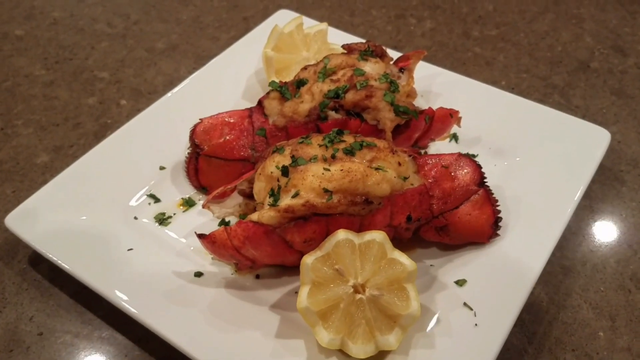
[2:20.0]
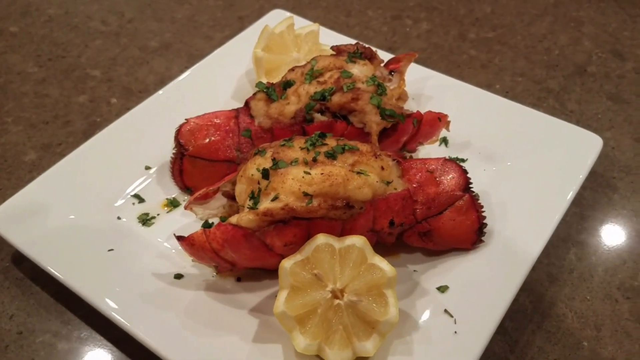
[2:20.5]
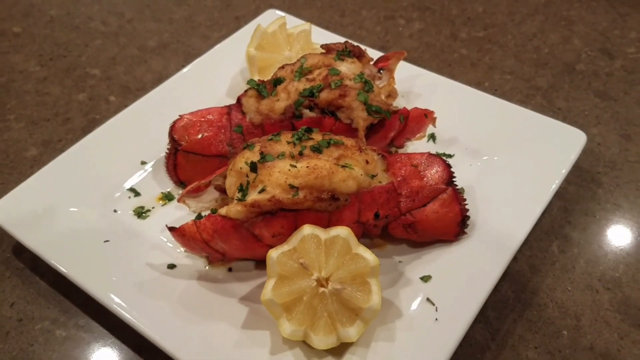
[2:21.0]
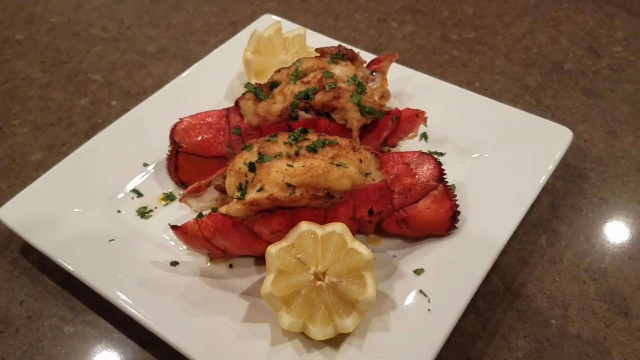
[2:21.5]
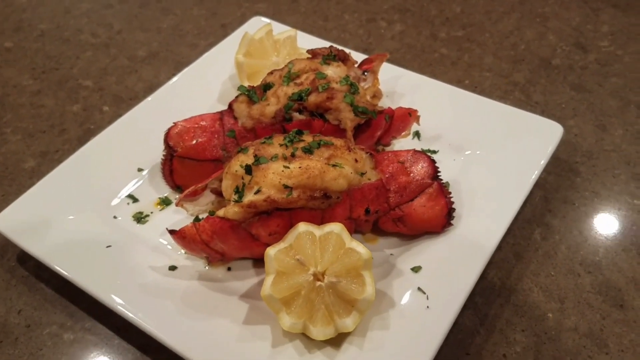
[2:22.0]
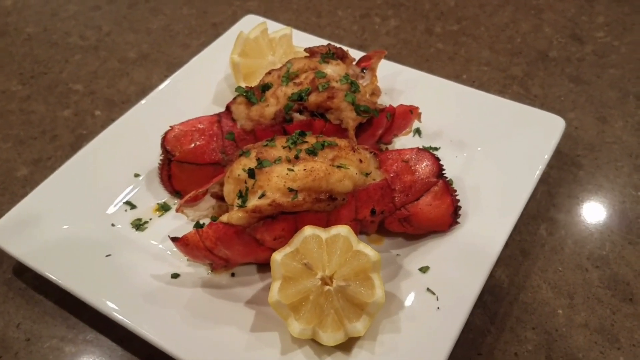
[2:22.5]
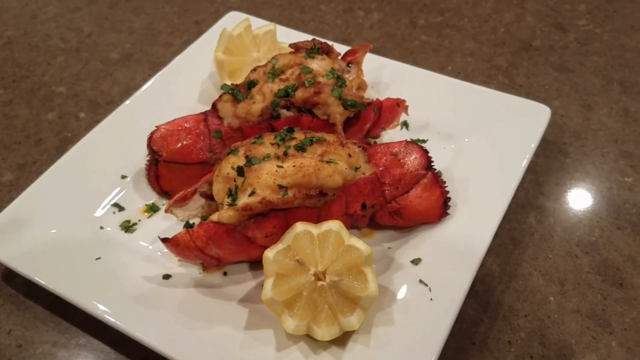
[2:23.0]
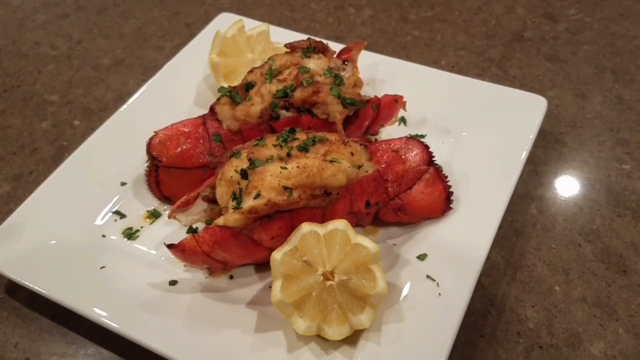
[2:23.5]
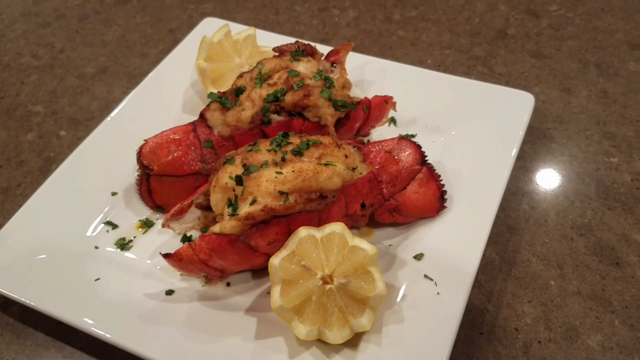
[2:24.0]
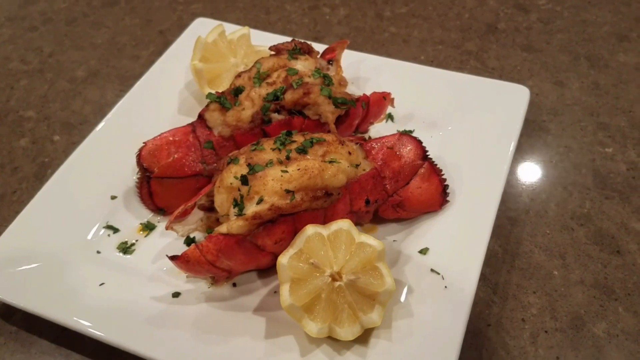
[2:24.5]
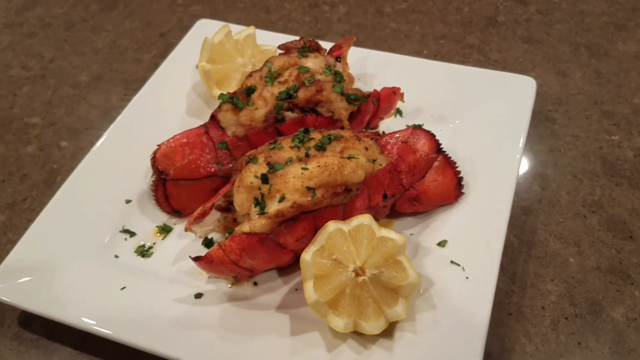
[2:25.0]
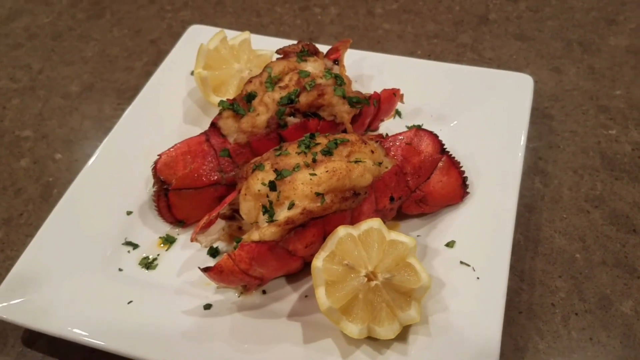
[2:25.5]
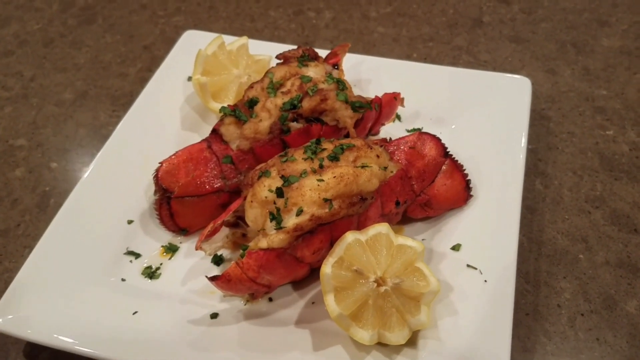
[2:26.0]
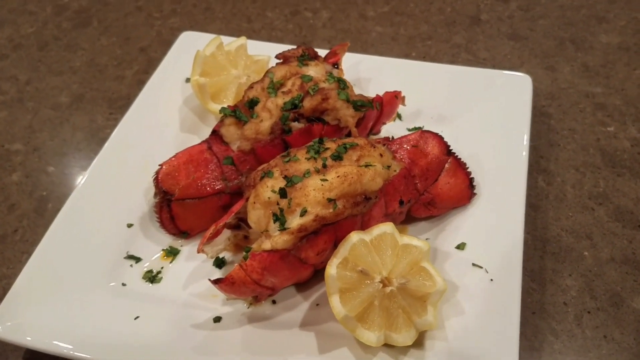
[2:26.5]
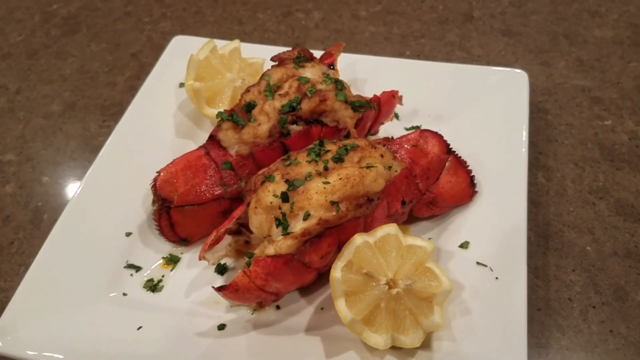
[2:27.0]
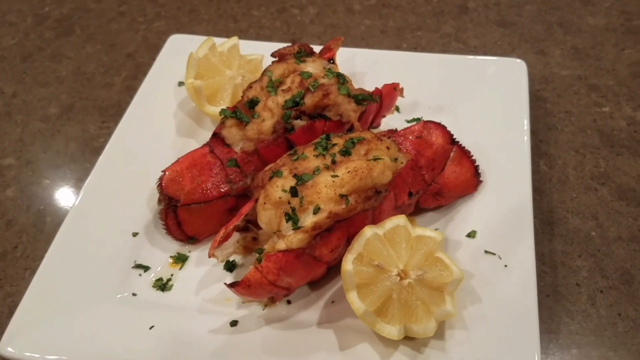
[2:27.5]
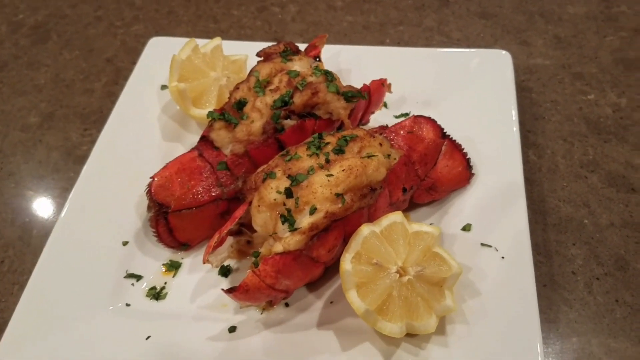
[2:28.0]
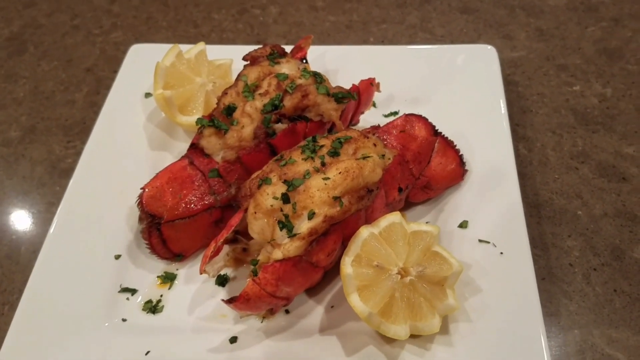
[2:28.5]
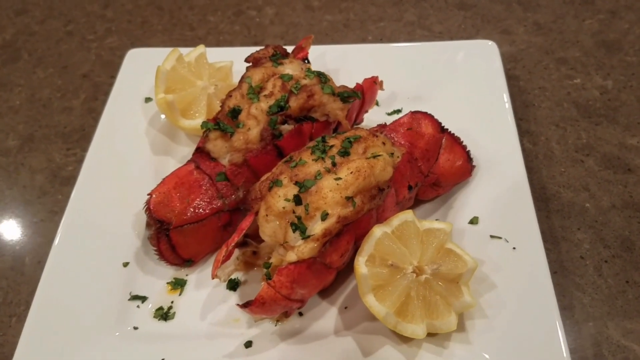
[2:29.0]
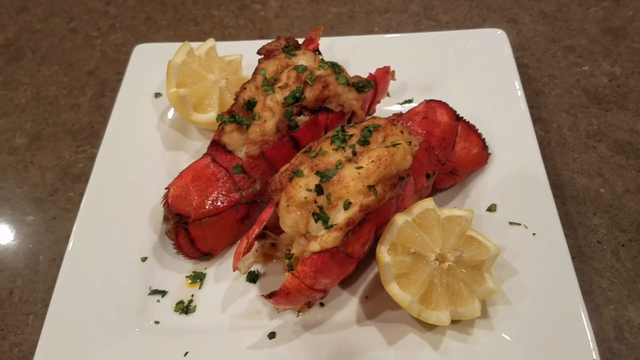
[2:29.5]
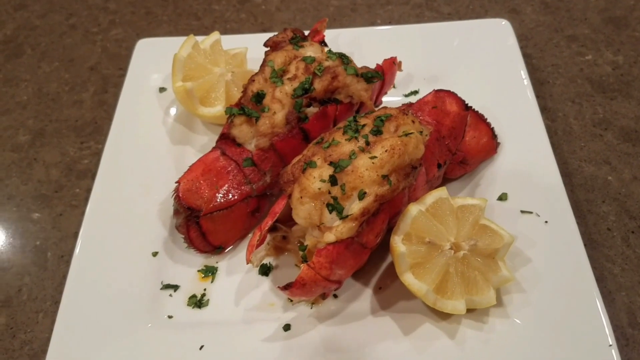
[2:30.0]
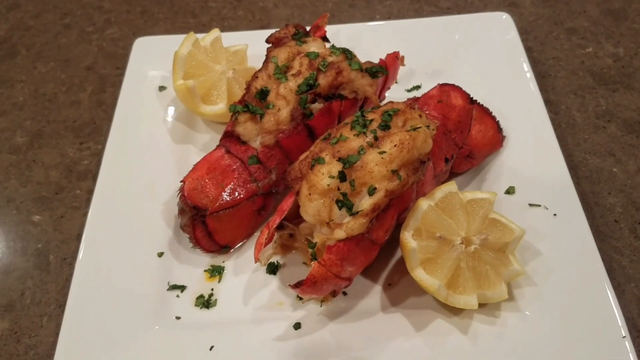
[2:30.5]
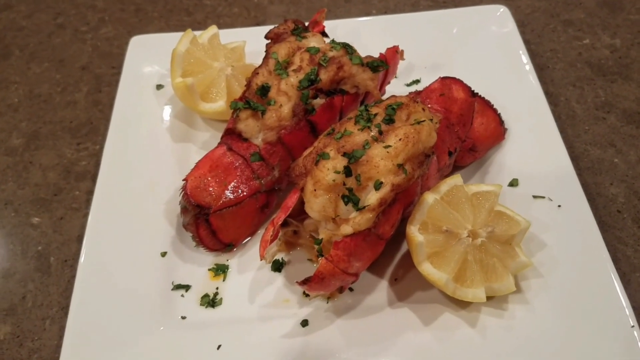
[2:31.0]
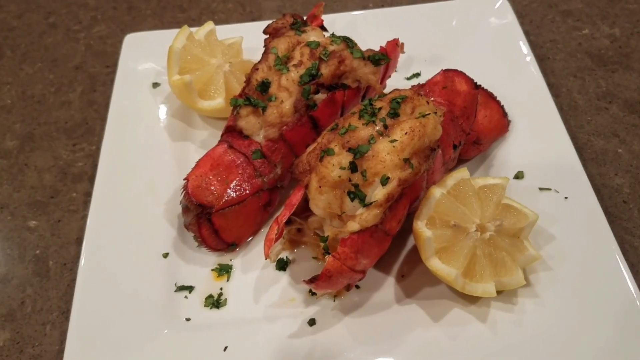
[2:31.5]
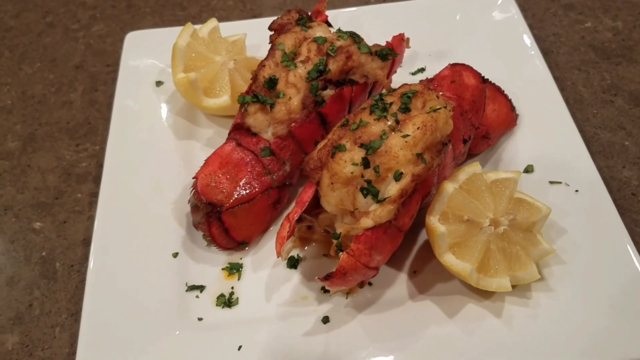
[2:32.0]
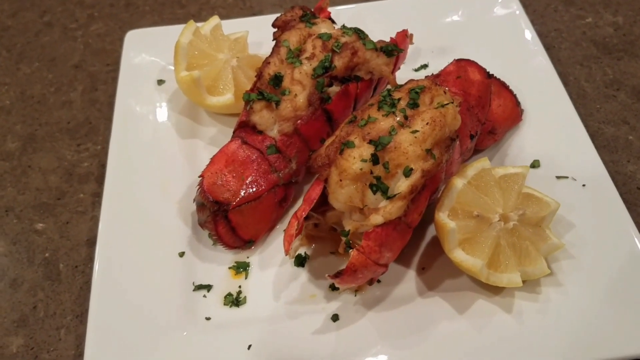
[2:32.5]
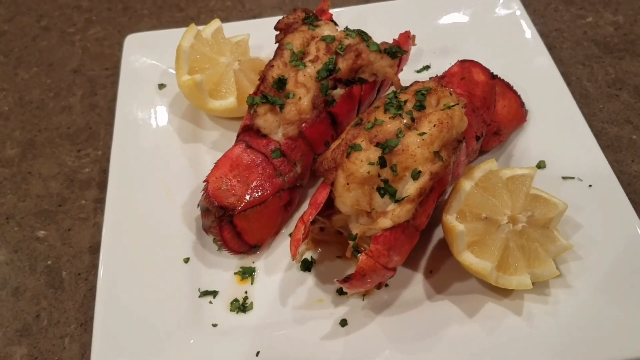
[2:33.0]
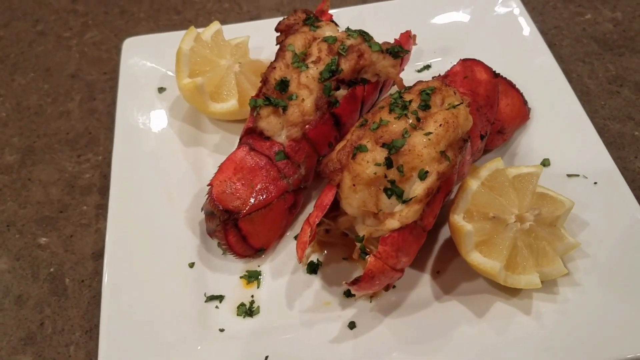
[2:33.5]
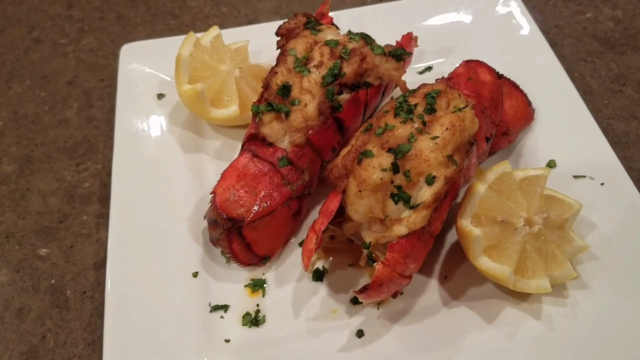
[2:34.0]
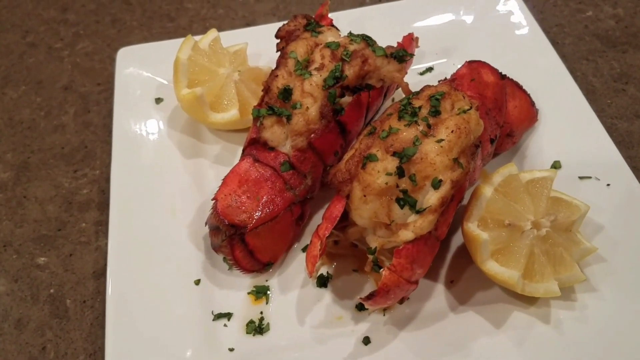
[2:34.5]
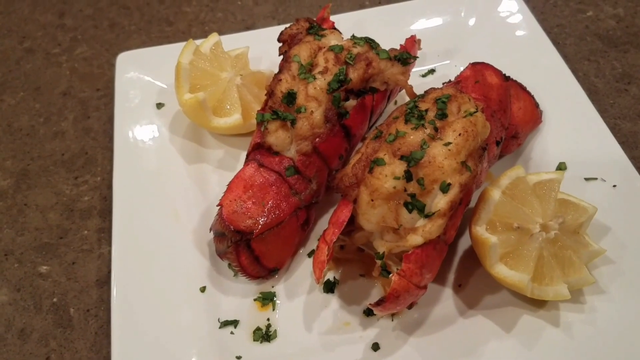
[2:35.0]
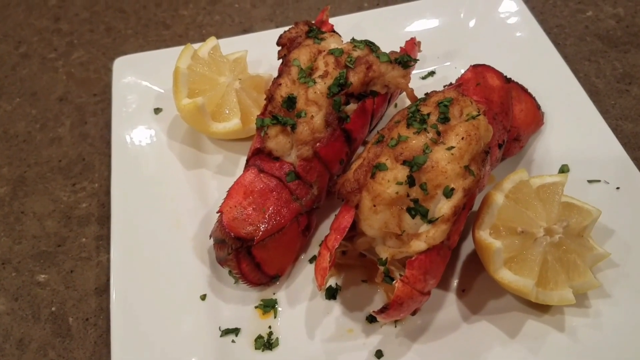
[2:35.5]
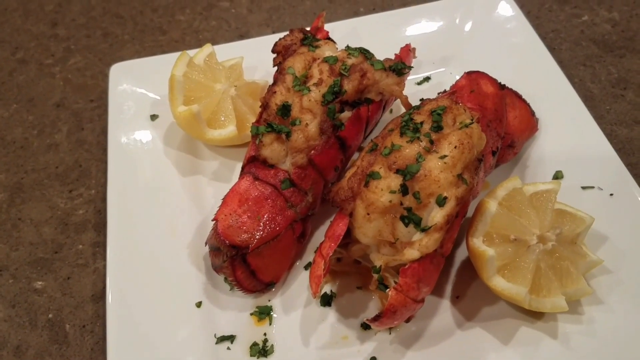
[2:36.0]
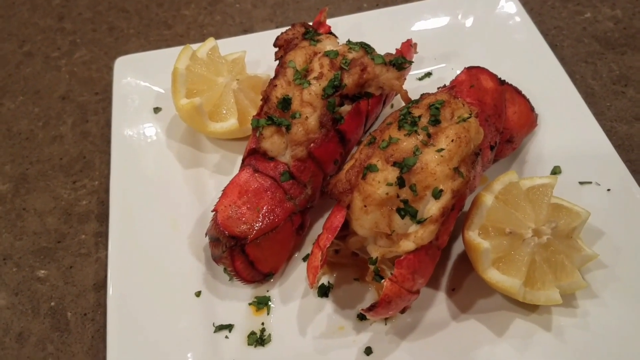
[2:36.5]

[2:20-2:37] A white square plate is on a granite kitchen counter. On the plate are two large, cooked, pink lobster tails sprinkled with green parsley. On each side of the lobster tails are lemon slices cut and shaped to look like a star. The camera zooms in and out and moves around and around the plate, zooming in on the freshly cooked tails. They are now pink rather than the black they were when the cook was touching them raw, and they look glossy from the butter drizzled on top of them after they finished cooking.